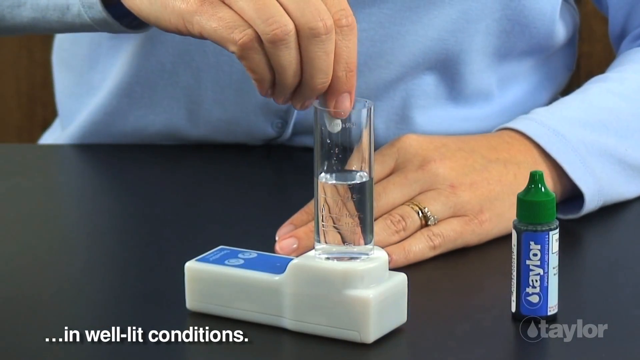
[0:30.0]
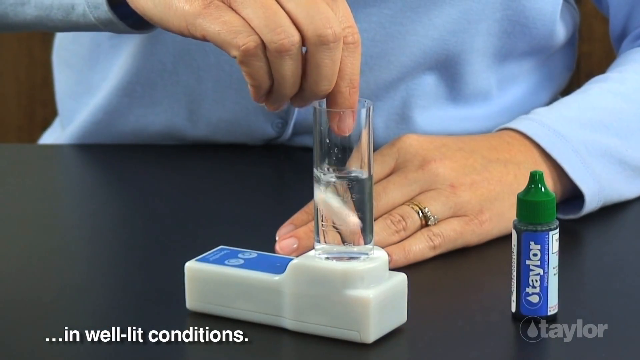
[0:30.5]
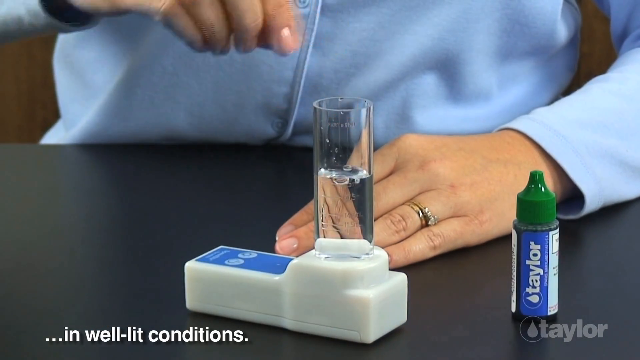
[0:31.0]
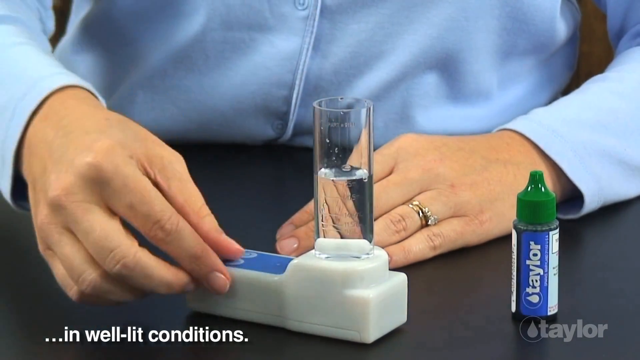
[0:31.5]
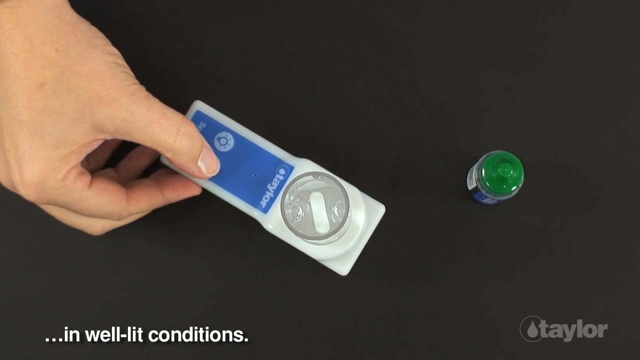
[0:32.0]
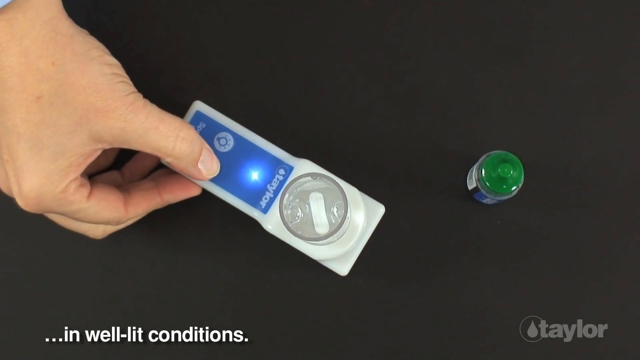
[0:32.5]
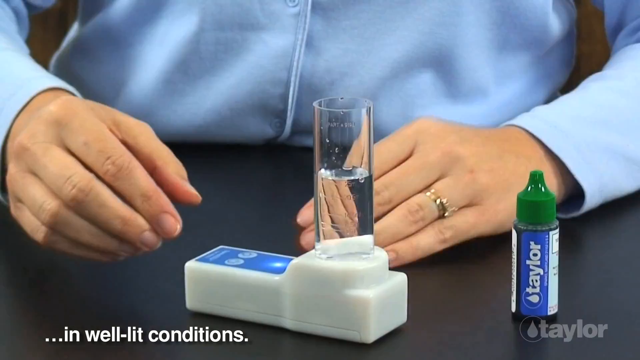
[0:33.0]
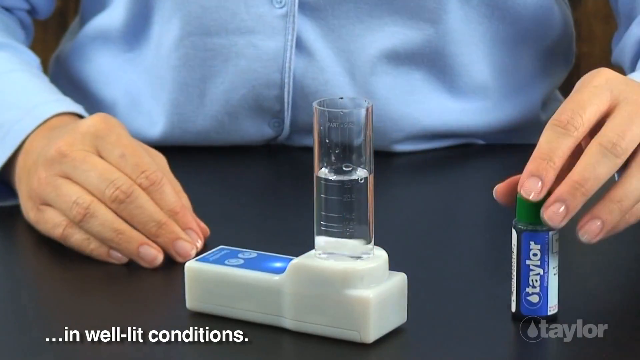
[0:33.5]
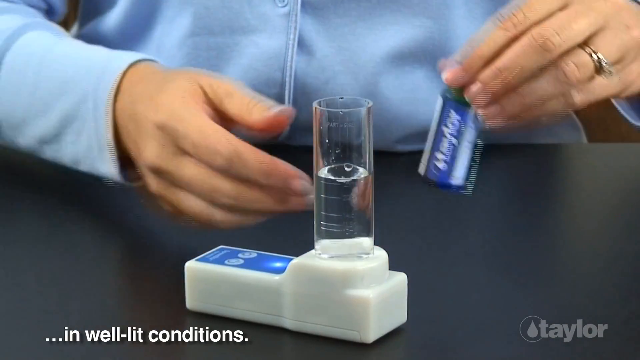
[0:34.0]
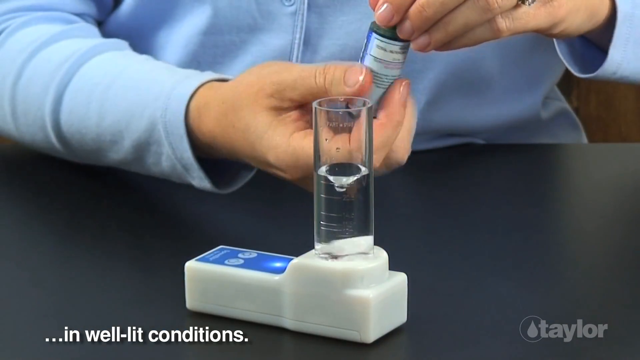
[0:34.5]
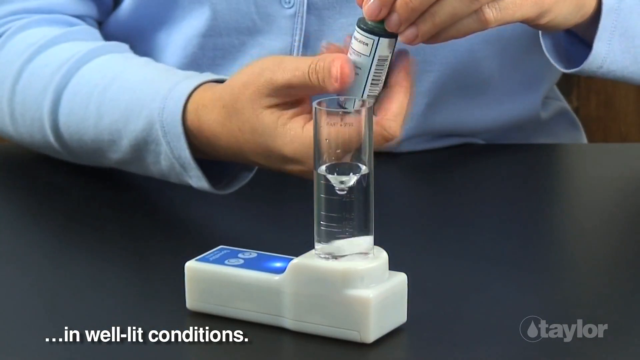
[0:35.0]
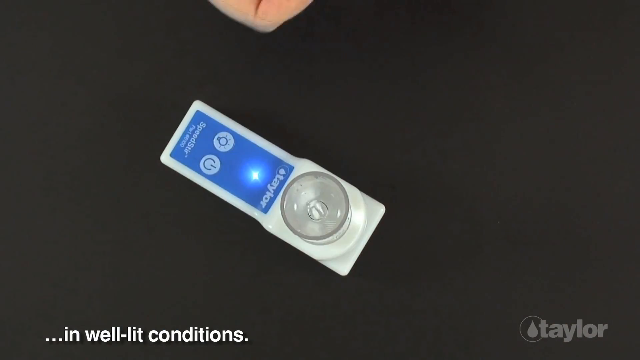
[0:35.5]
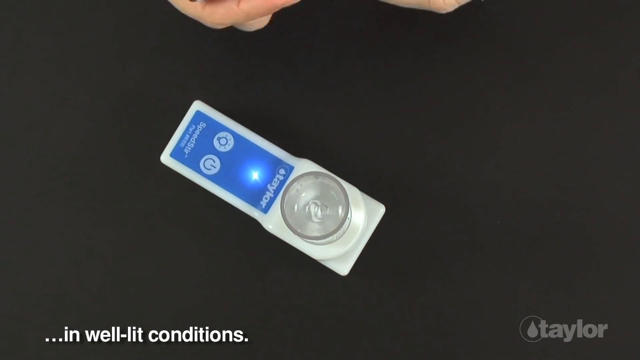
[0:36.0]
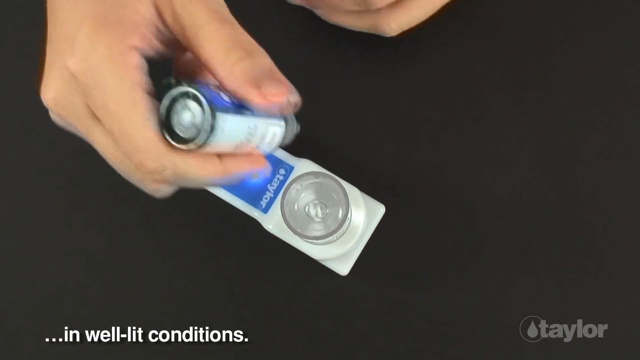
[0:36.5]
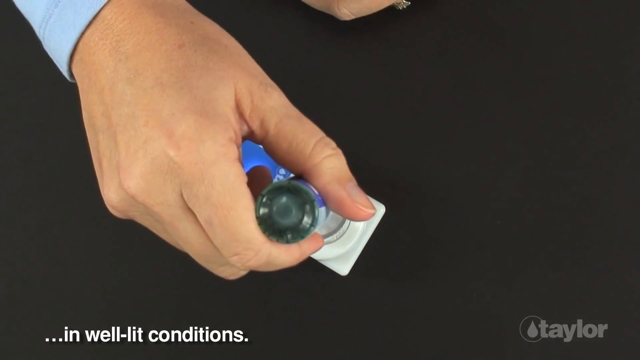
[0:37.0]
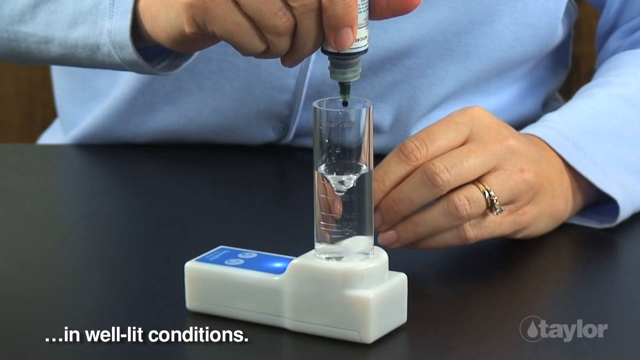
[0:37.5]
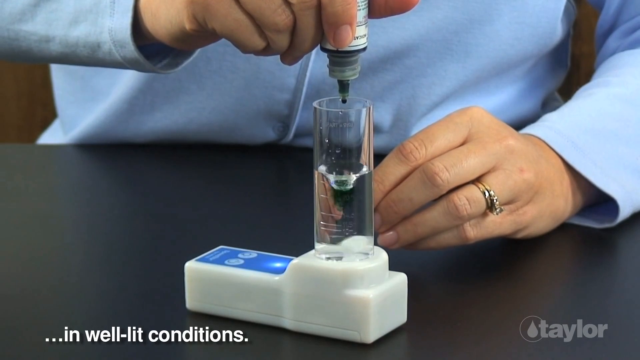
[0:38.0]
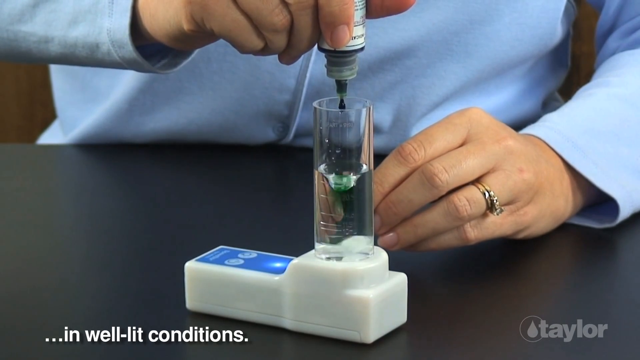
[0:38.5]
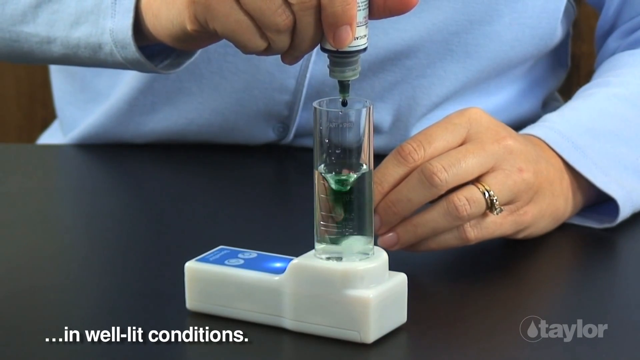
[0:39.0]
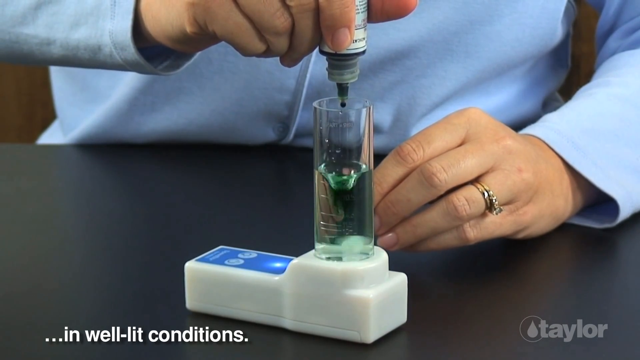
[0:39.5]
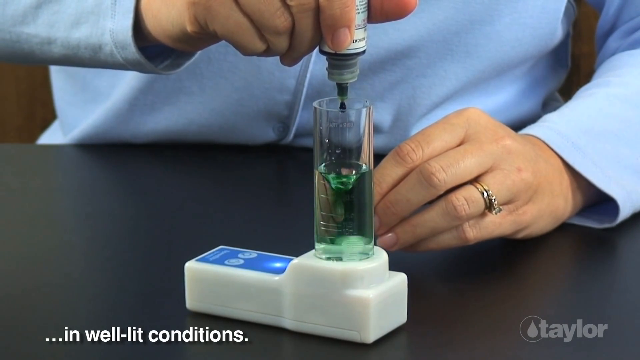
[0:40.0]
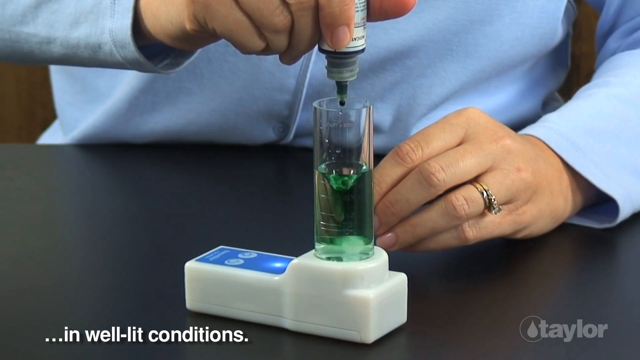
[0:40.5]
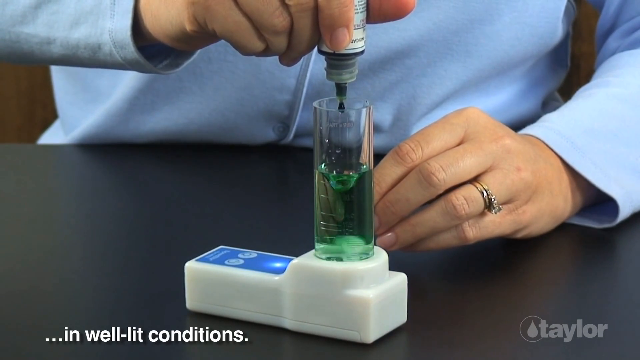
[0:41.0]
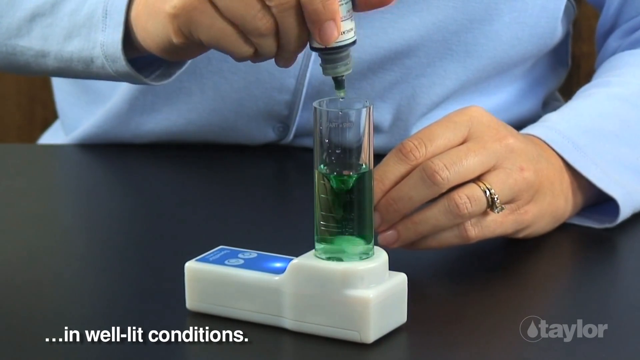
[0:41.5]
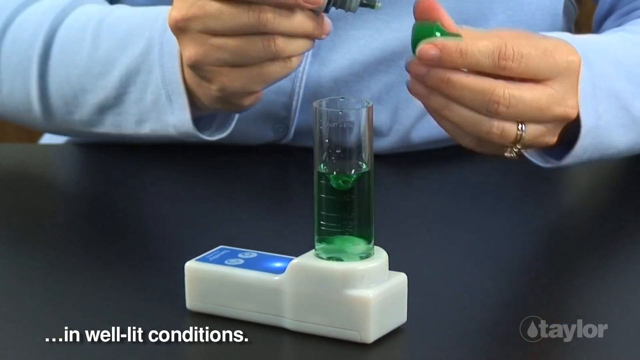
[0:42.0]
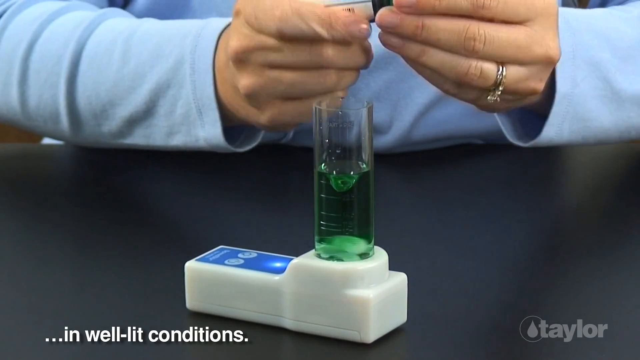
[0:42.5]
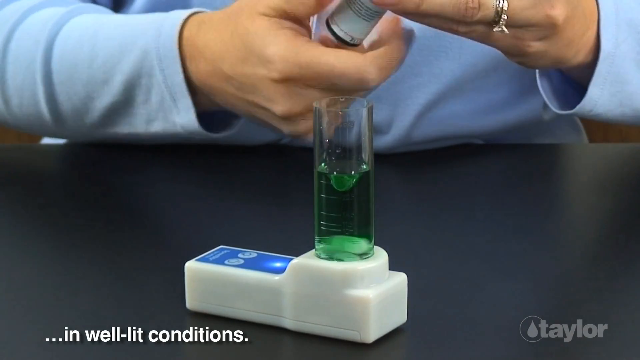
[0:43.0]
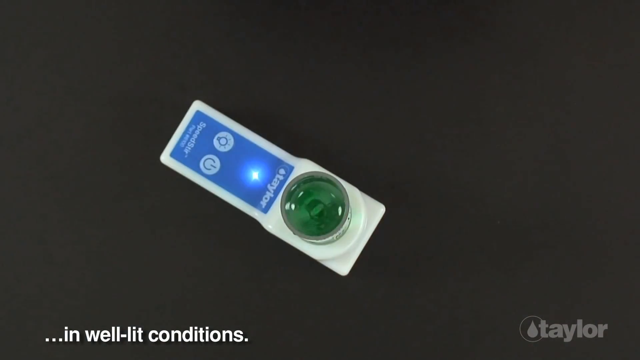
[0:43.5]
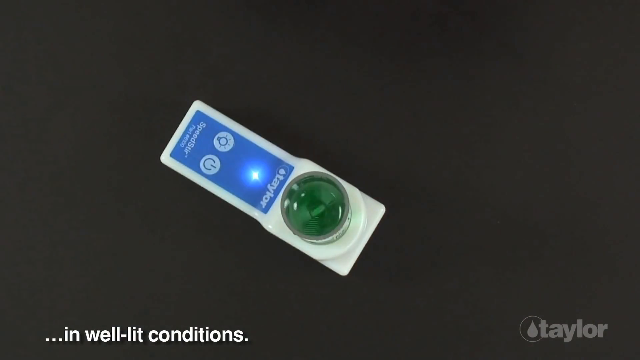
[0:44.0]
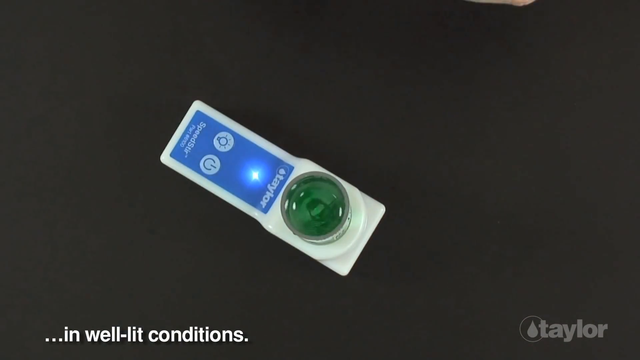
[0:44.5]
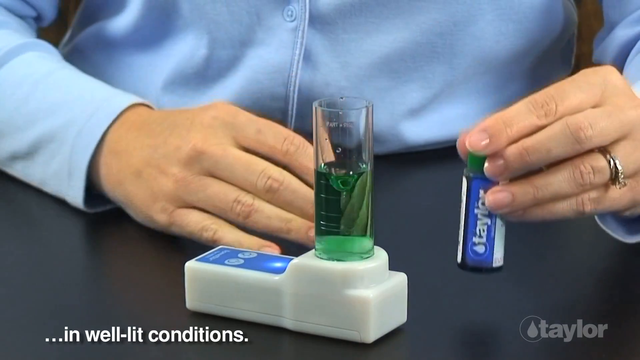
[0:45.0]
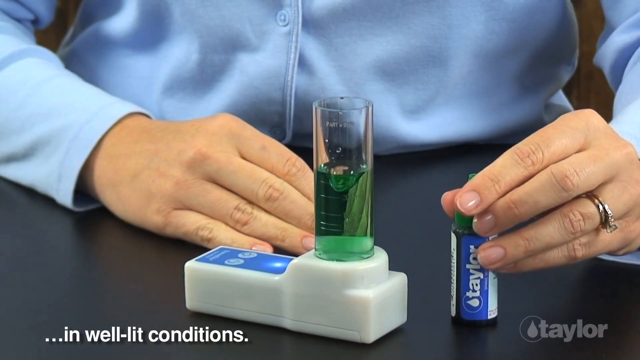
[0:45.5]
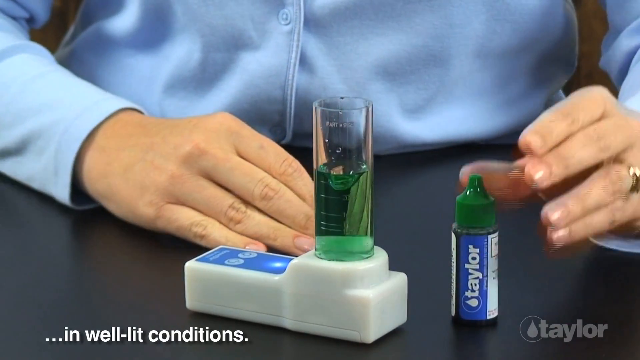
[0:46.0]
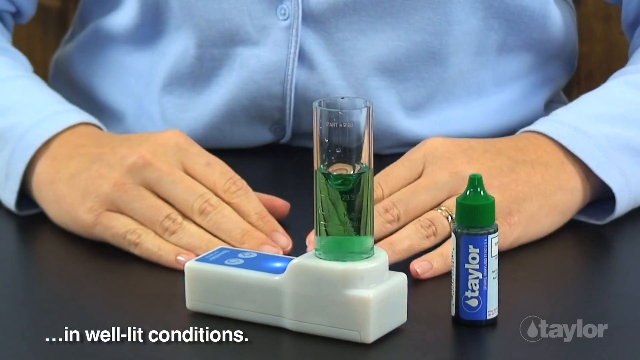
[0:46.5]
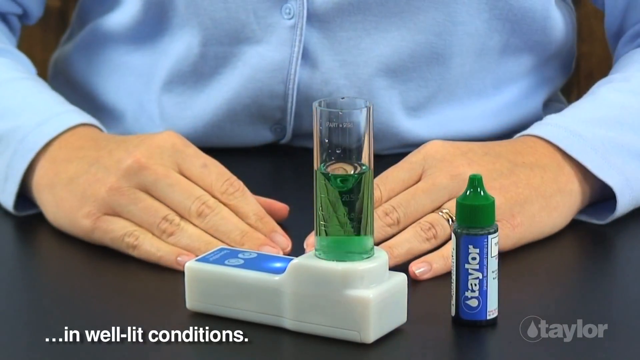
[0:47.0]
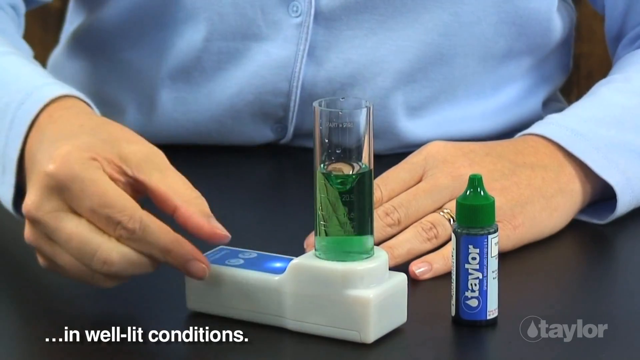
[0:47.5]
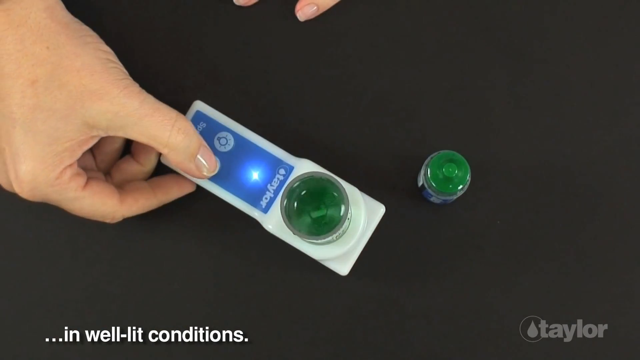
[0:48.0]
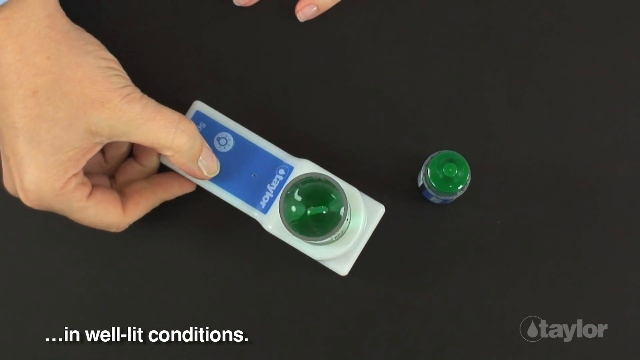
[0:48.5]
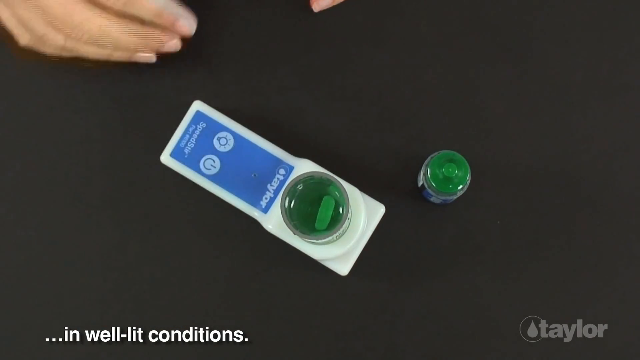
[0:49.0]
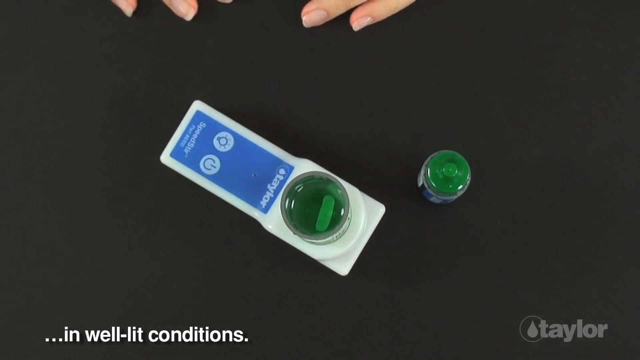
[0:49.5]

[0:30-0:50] With the pill in, a button on top of the blue label is pressed, and a light comes up underneath where it says "Taylor". The liquid starts to spin around. The person takes the green cap off the bottle and adds green drops into the cylinder as the water swirls. The liquid turns green and swirls, looking like a tornado in the middle; it fills about halfway up the cylinder. He presses the stop button, apparently a second button that stops the movement, and the liquid inside becomes still. On the blue label on top of the white contraption are two small white circles, looking like maybe an on button and an off button. The contraption is a rectangle set on the table, with a small circular raised part on one half where the cylinder is set in. The contraption is called Speedstir.